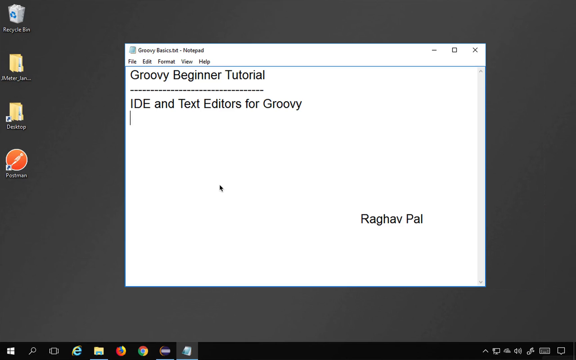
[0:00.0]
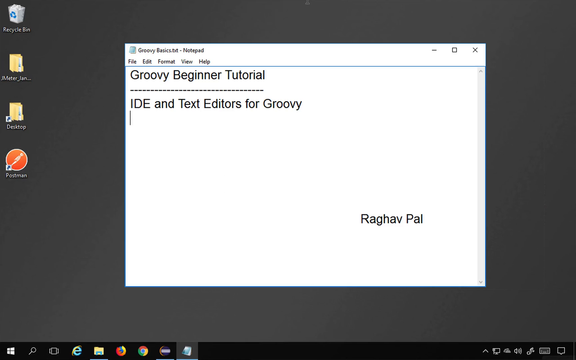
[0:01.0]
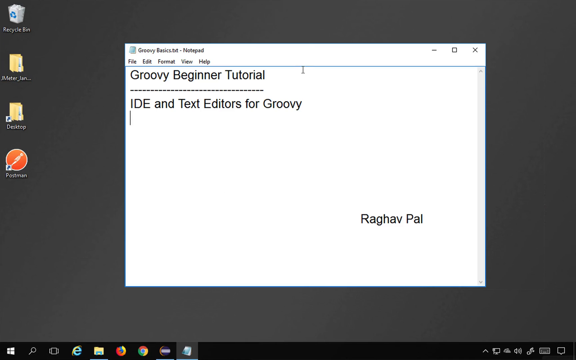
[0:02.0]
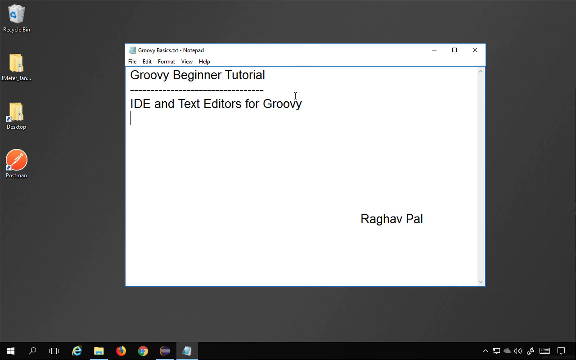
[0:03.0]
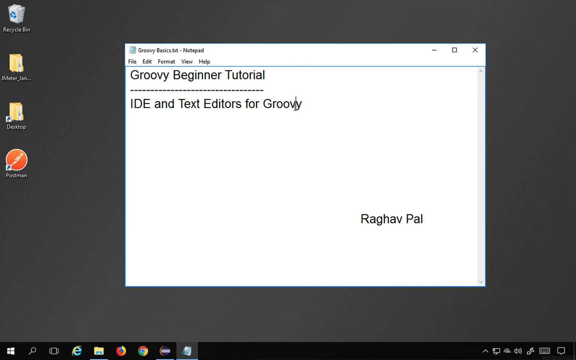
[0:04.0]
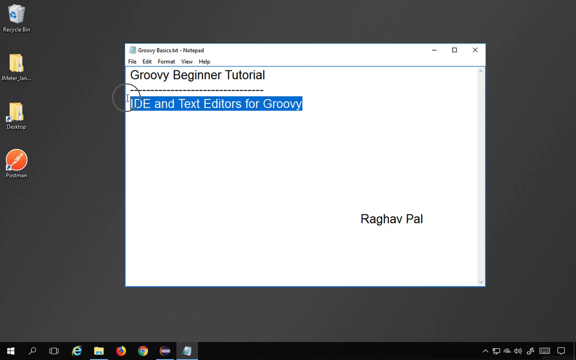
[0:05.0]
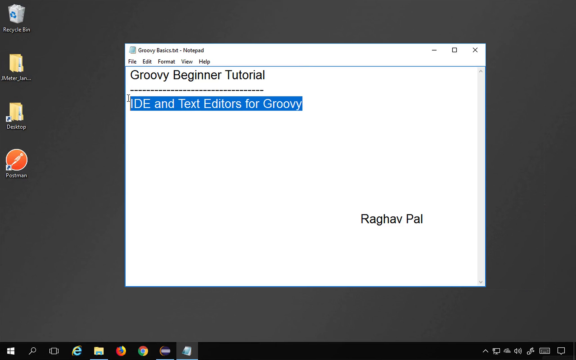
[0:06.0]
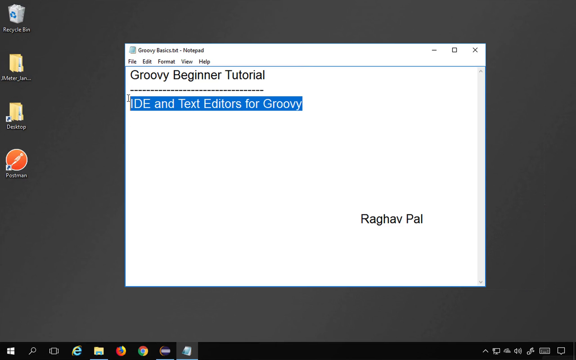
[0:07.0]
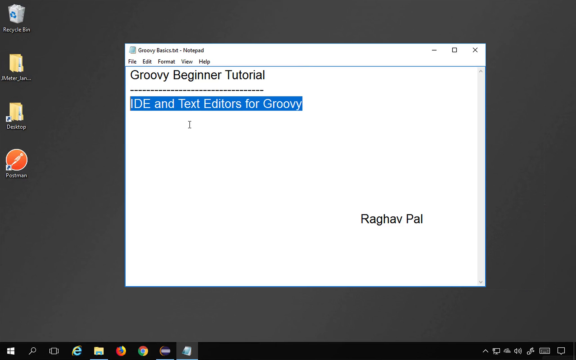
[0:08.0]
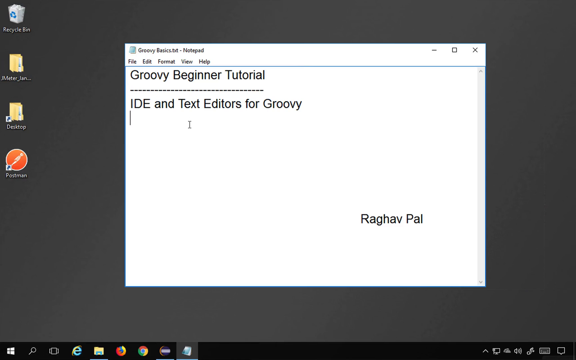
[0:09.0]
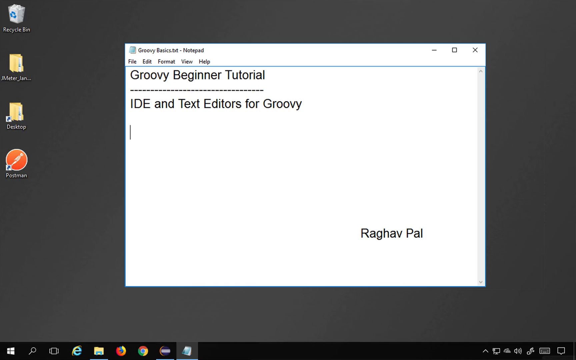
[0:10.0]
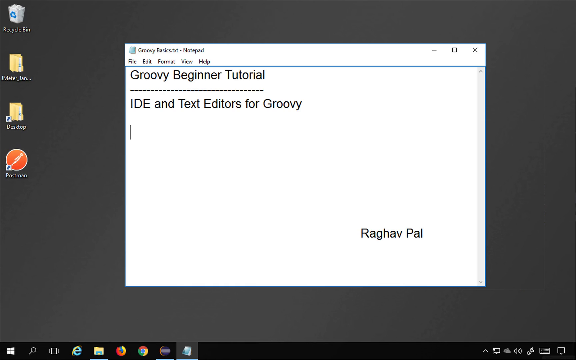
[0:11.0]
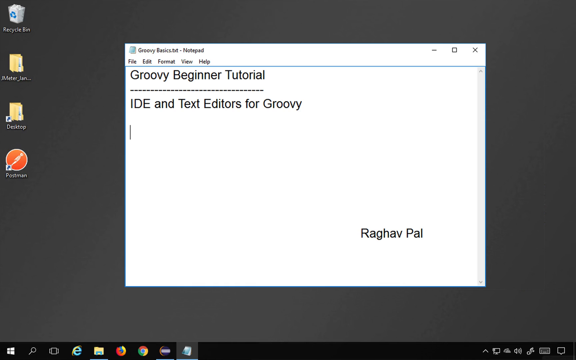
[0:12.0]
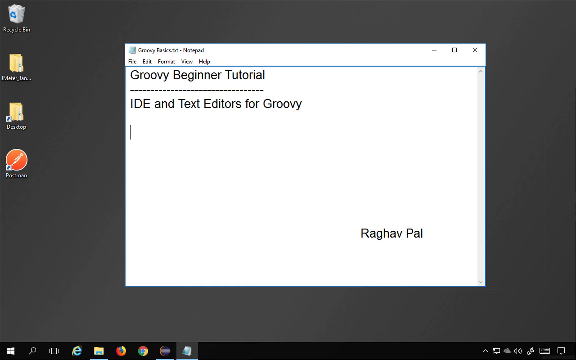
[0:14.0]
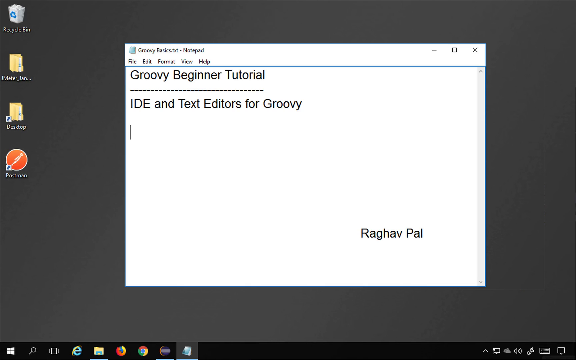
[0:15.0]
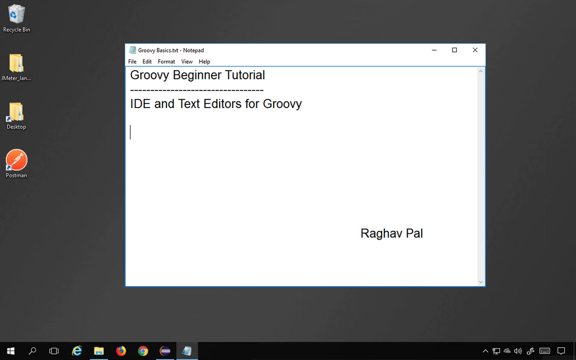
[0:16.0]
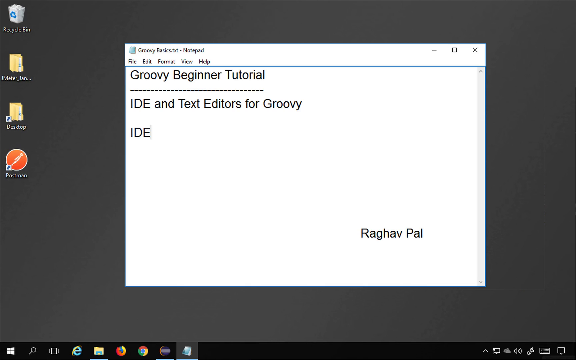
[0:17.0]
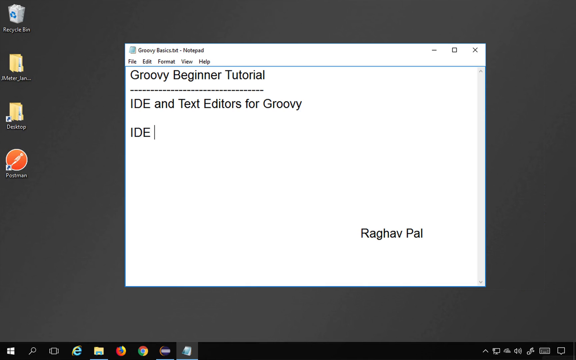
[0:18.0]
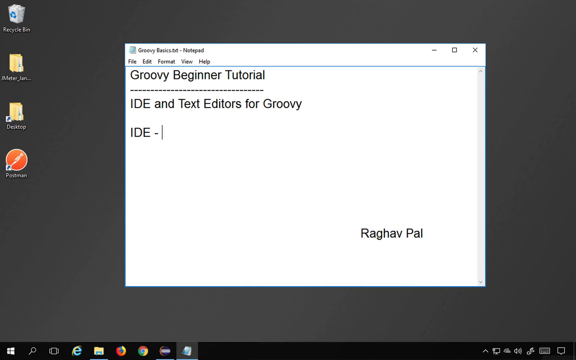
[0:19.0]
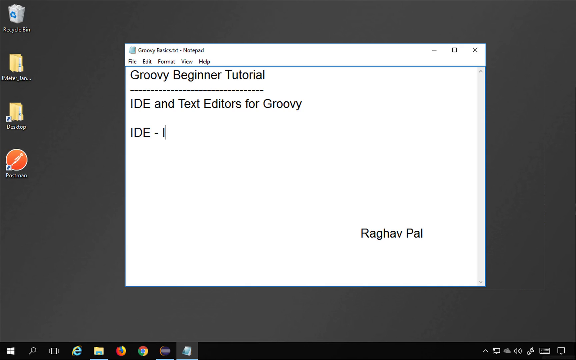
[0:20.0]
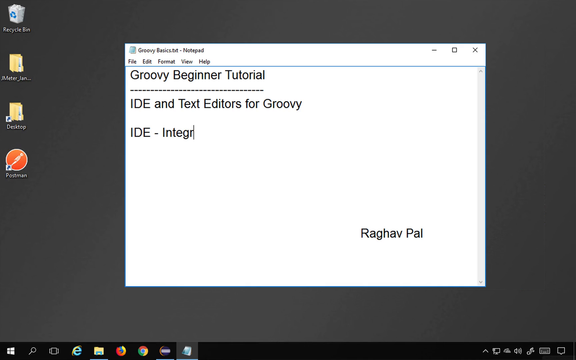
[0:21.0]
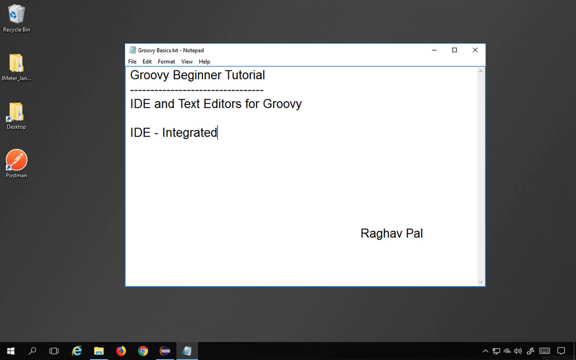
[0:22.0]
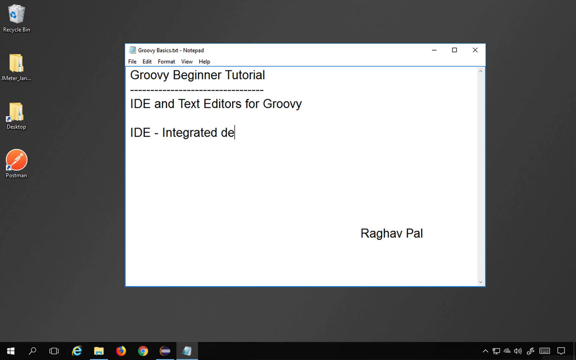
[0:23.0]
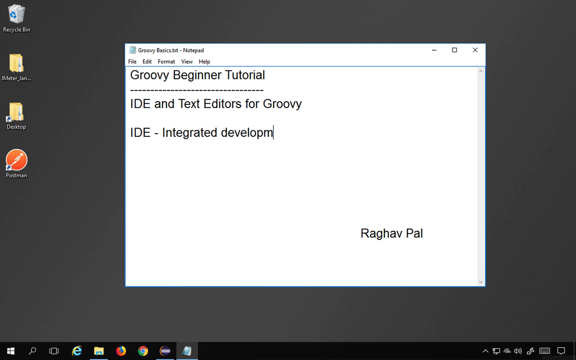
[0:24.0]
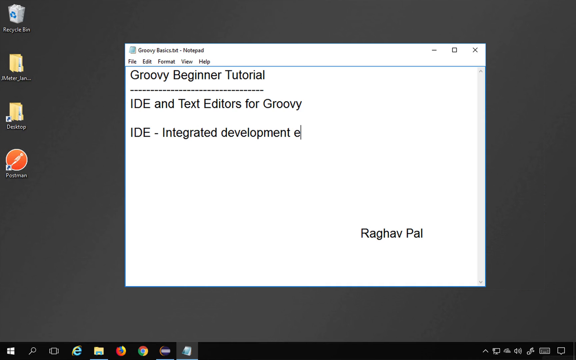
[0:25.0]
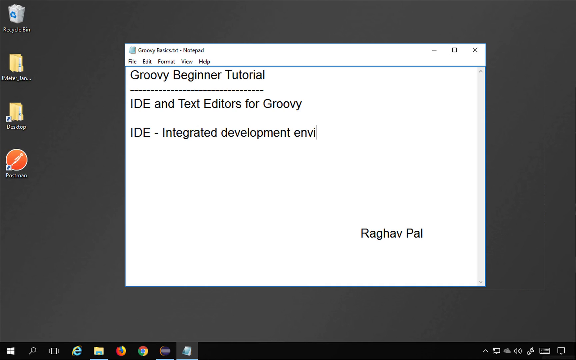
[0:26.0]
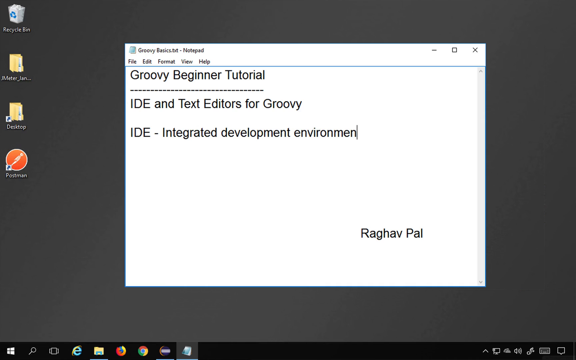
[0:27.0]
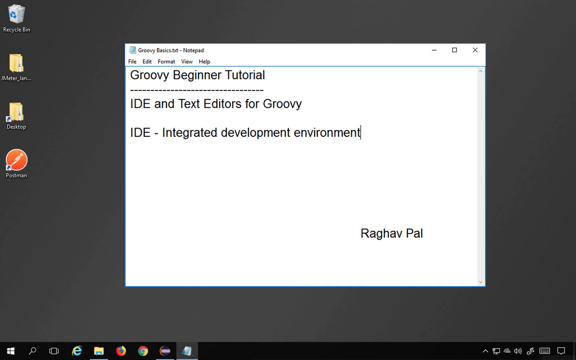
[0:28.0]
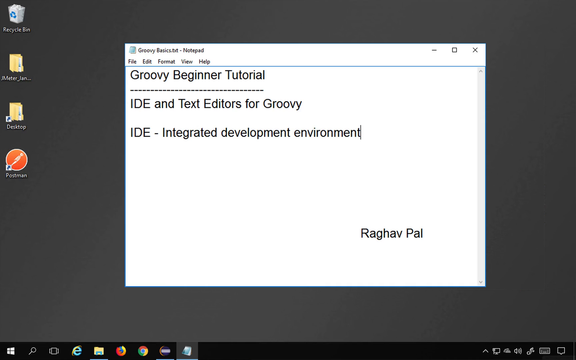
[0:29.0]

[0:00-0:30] A computer monitor shows a gray desktop with four shortcuts arranged vertically, one on top of the other: Recycling Bin, Jmeter_January, Desktop (two of these are folders) and what looks like Postman. In the middle of the screen is a white pop-up with black text and a black cursor. The text reads "Groovy Beginner Tutorial" and "IDE, and text editors for Groovy", and there are tabs for File, Edit, Format and Help. A name, Raghav Pal, is at the bottom to the right. The person highlights the text "IDE and text editors for Groovy", moves the cursor forward about one space, and begins typing "IDE - integrated development environment".